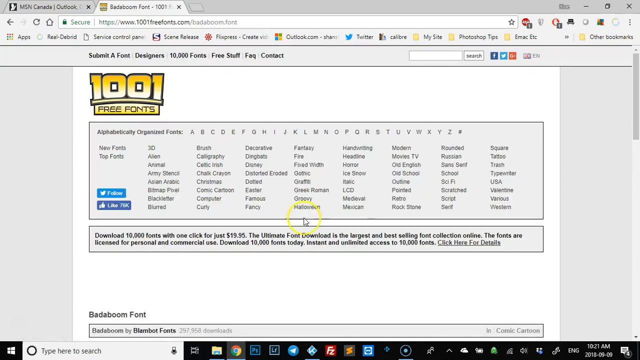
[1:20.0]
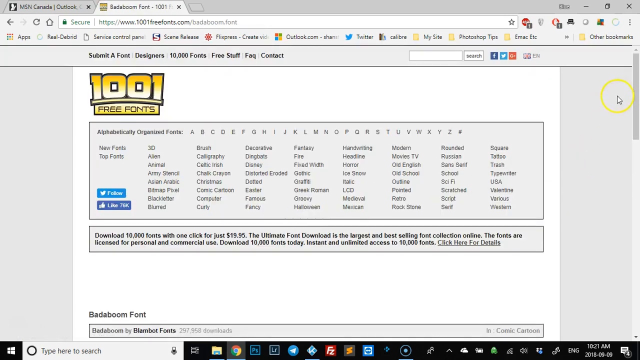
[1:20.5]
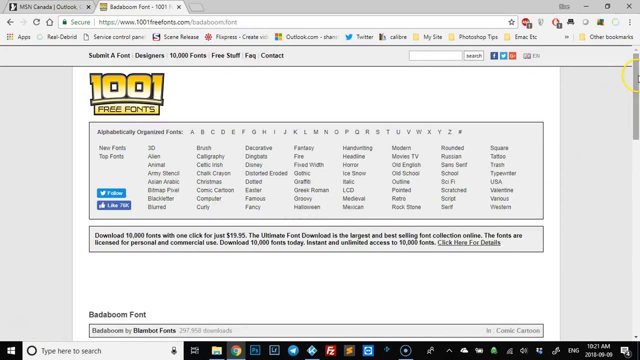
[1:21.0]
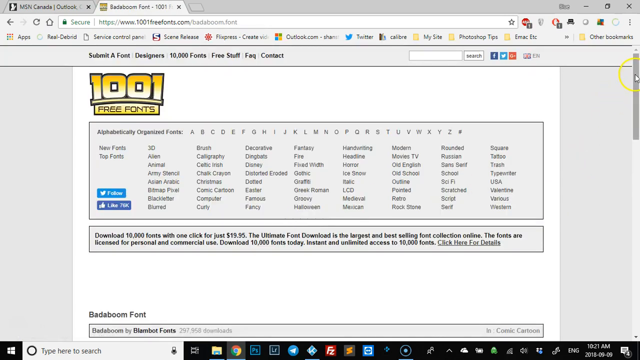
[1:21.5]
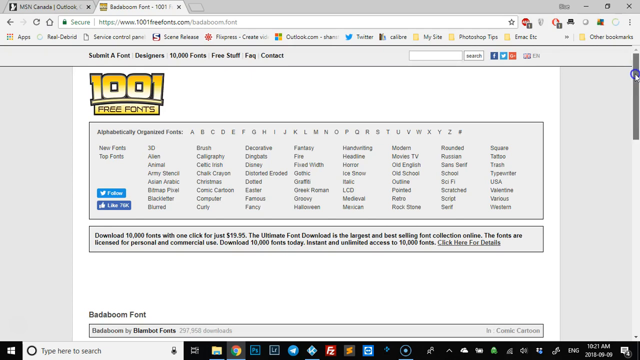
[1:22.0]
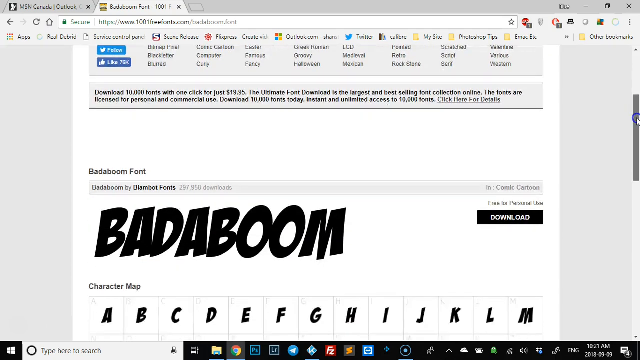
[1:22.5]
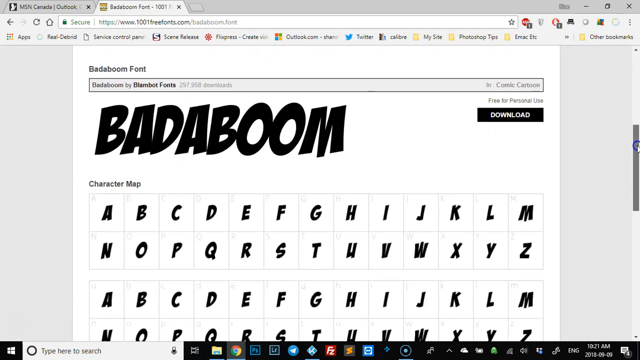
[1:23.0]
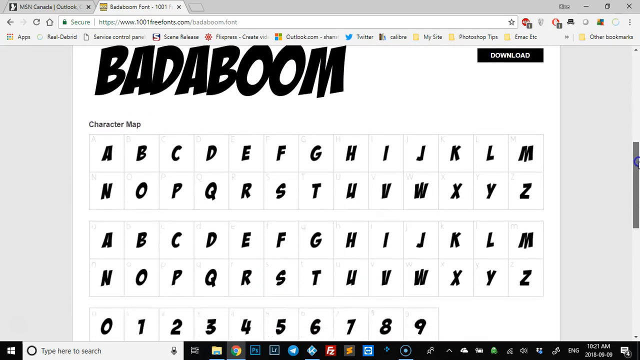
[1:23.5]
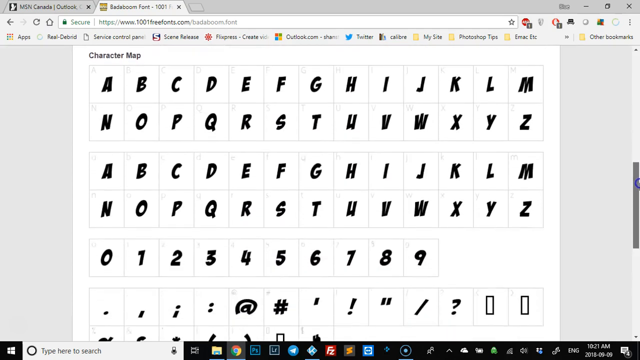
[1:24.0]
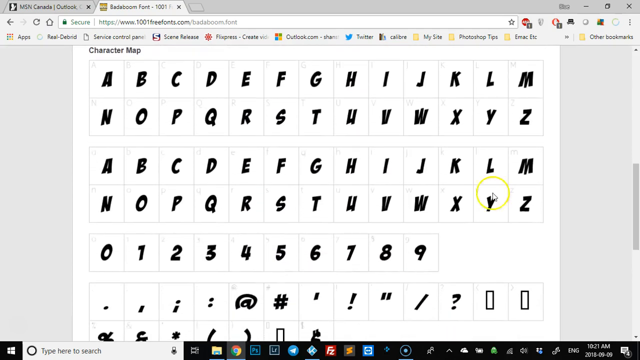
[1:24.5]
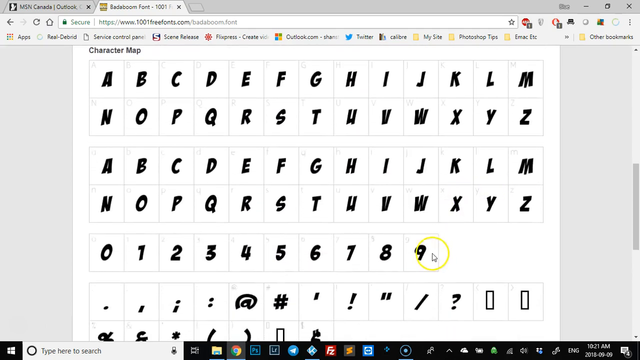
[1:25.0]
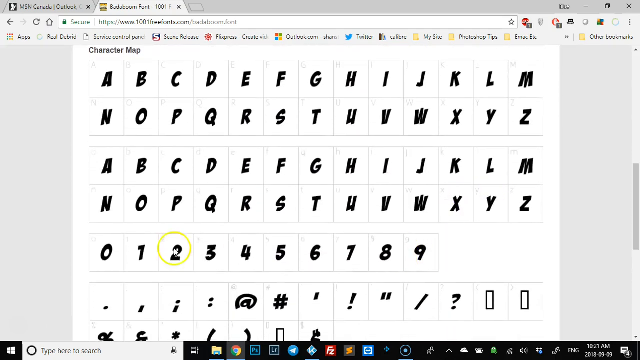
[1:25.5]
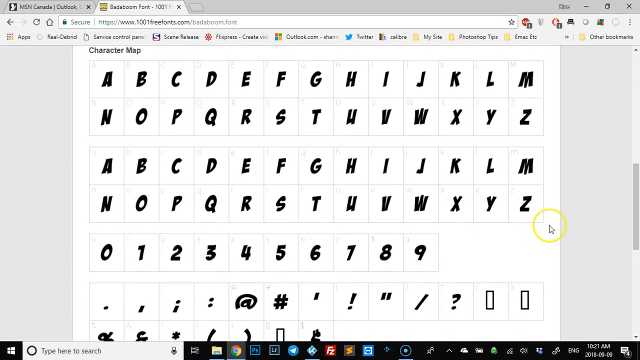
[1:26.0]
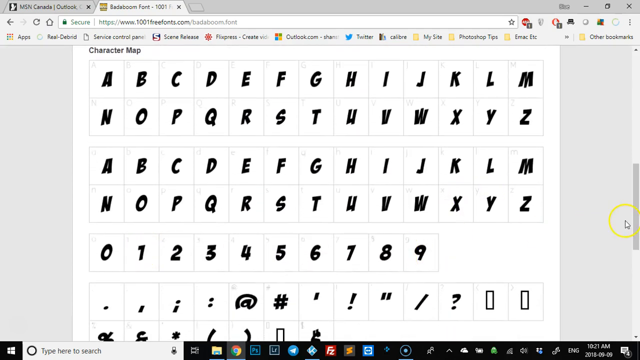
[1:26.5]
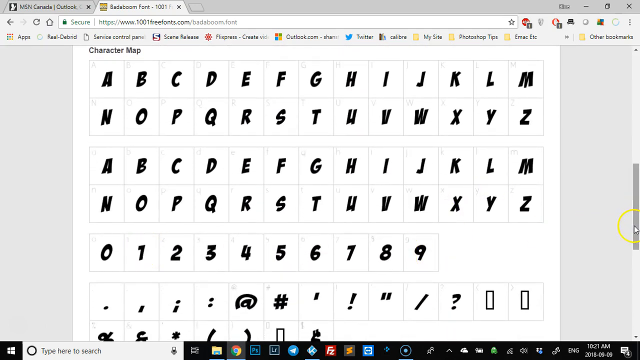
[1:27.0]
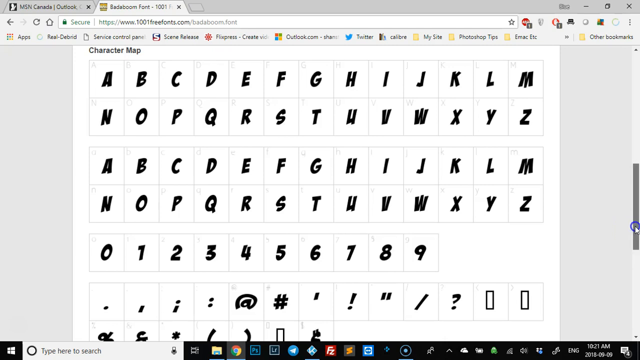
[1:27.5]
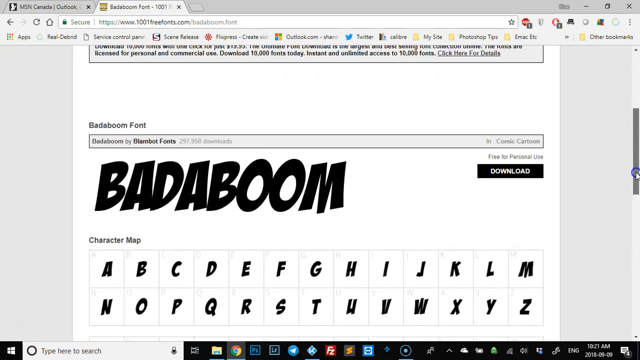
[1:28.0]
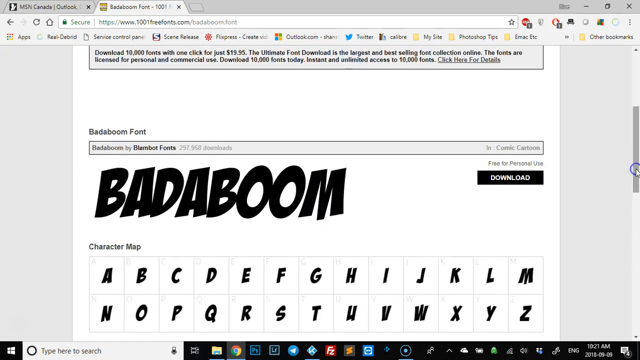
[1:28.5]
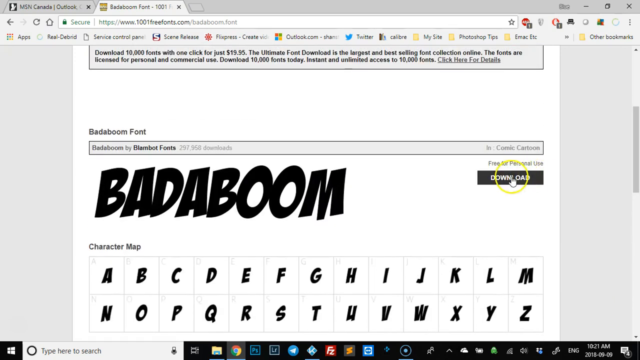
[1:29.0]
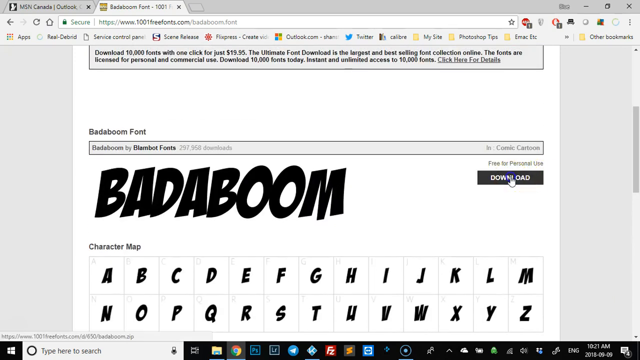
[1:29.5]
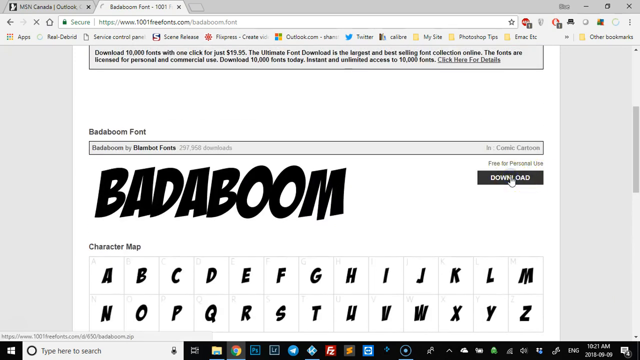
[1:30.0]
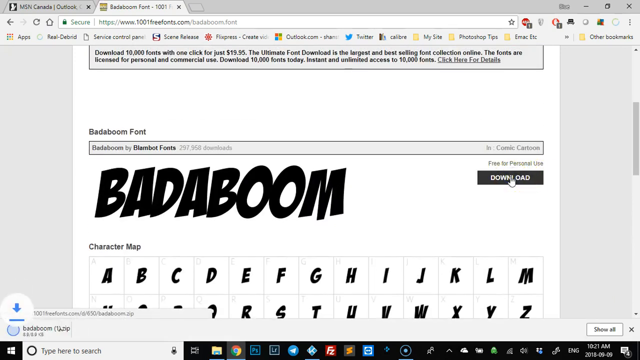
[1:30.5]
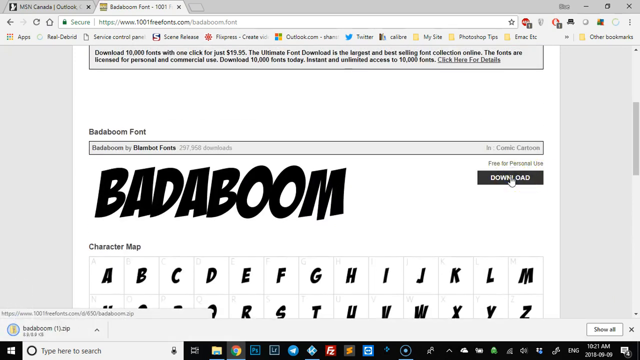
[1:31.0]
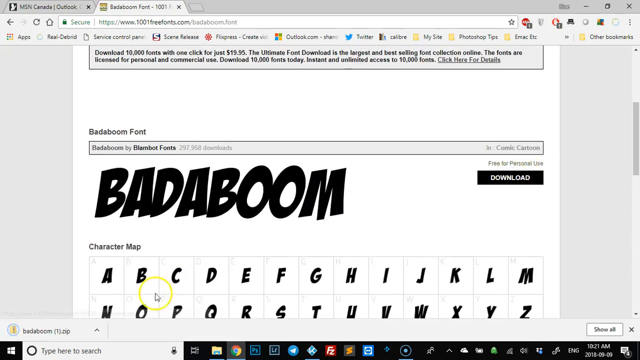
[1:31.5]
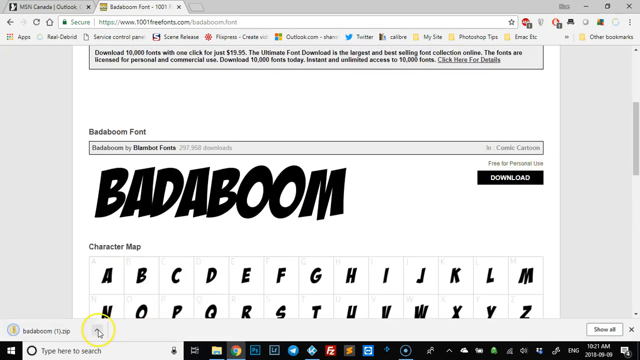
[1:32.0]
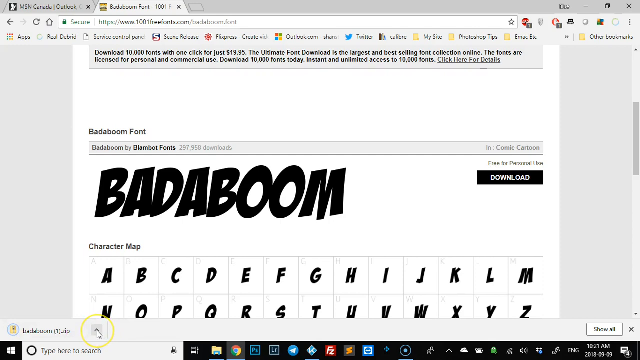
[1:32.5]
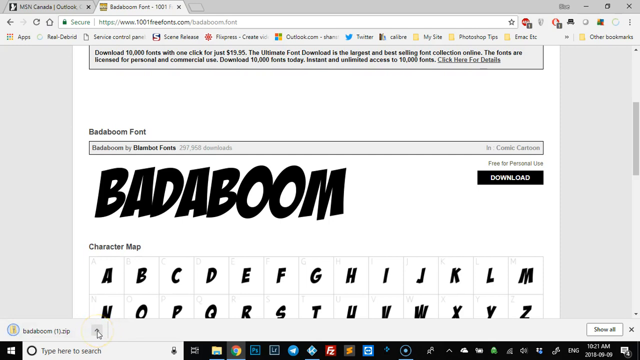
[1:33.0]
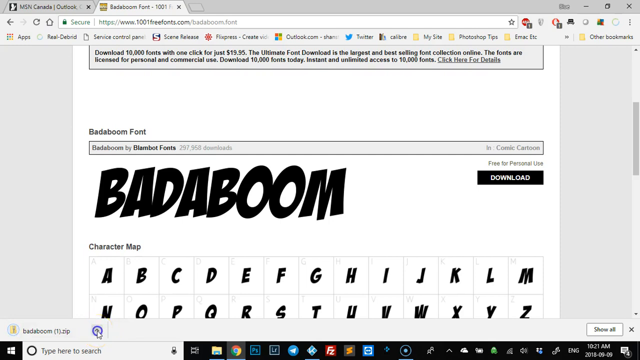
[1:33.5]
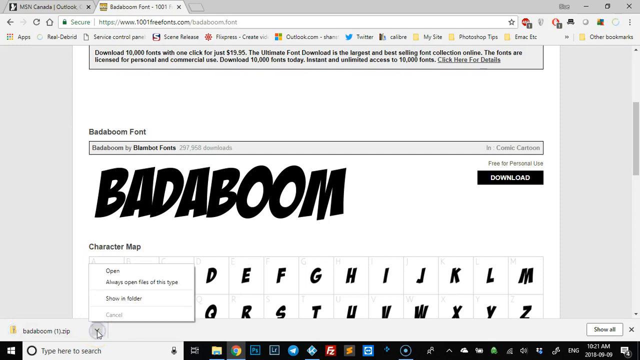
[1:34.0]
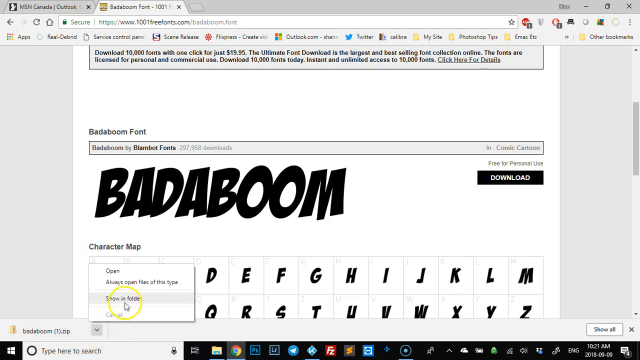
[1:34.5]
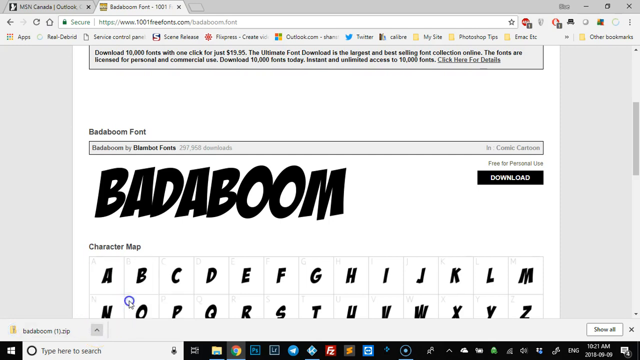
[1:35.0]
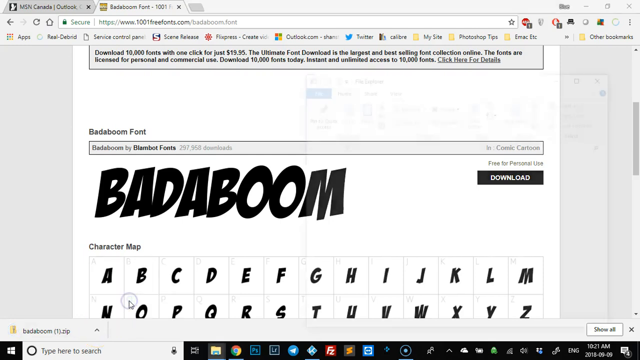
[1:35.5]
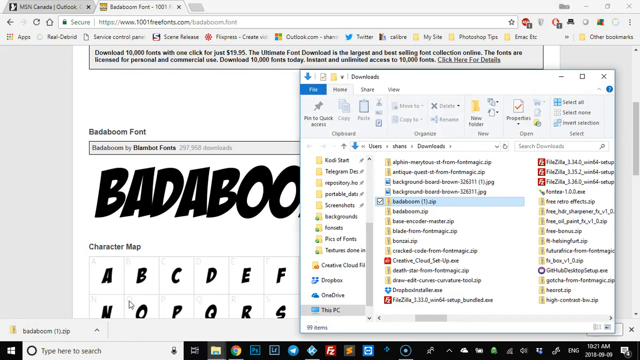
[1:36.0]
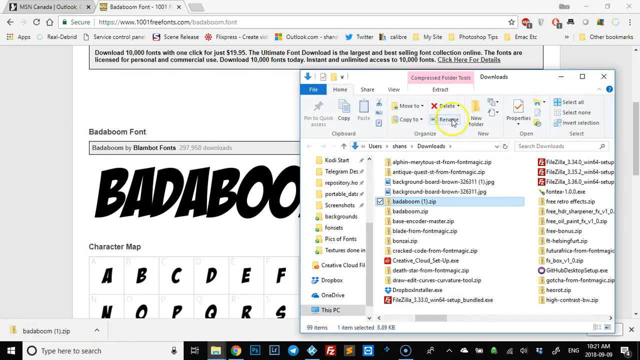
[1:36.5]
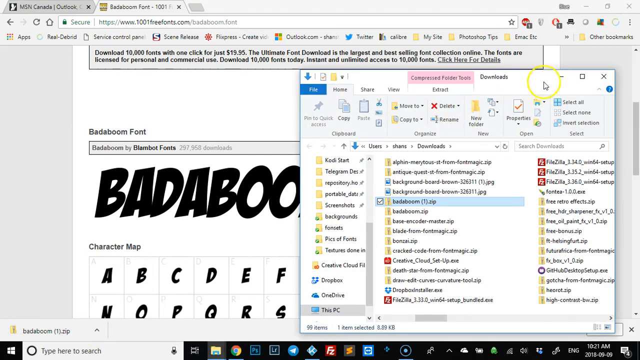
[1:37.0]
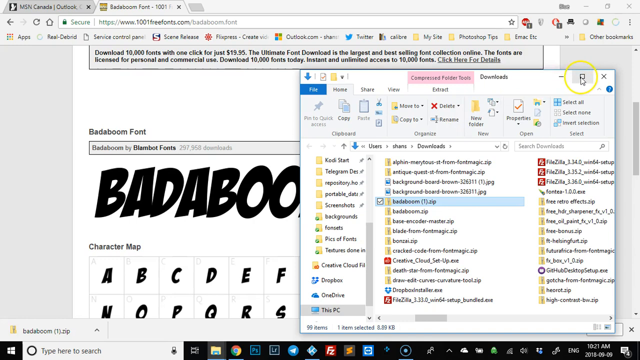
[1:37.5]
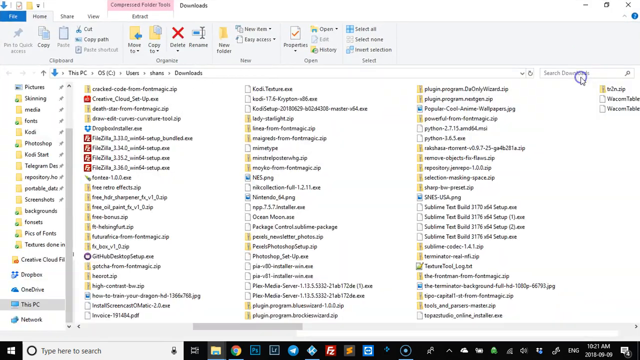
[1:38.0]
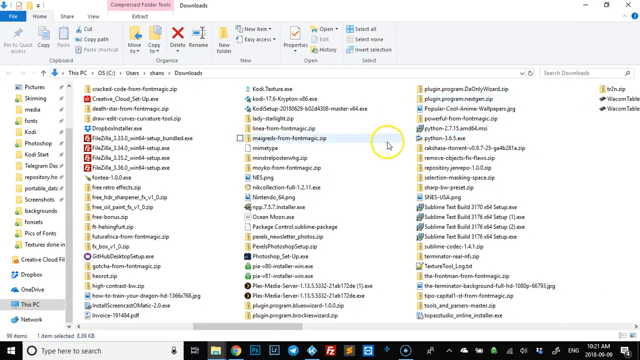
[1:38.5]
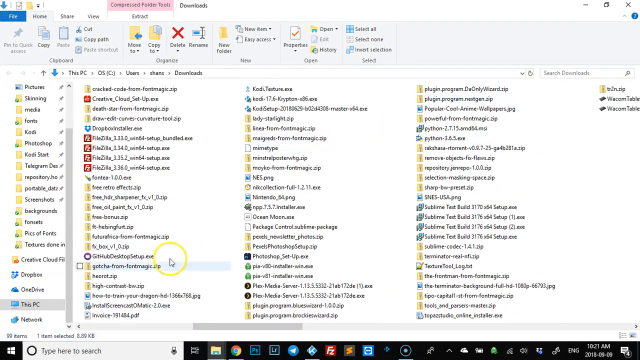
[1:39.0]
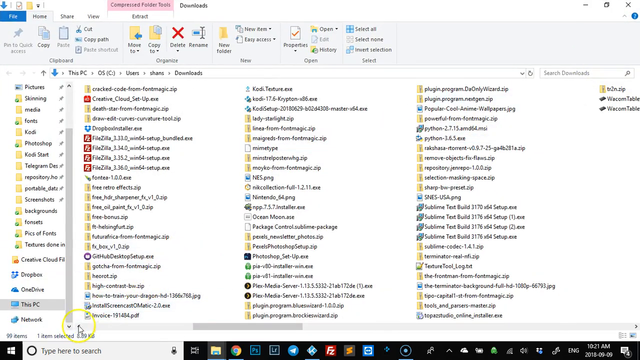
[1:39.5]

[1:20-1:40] The 1001 Free Fonts homepage is shown. At the top is what looks to be a lock icon with "secure" next to it and HTTPS to its right, along with the web address. A star at the top of the screen is not highlighted, so the page is not a favorite. There is an ad blocker and various other icons at the top. The person scrolls down to "Bada Boom," one of the highlighted fonts available, then clicks and downloads it. The file apparently is zipped and has to be unzipped. It is shown in the folder, and the person does a little search through multiple folders; the file is kind of deep in there, which is a bit confusing because there is a lot of content.